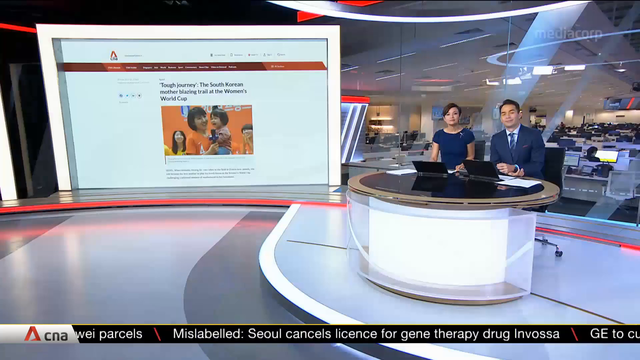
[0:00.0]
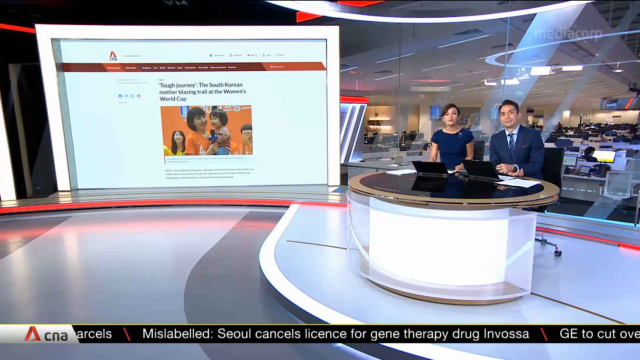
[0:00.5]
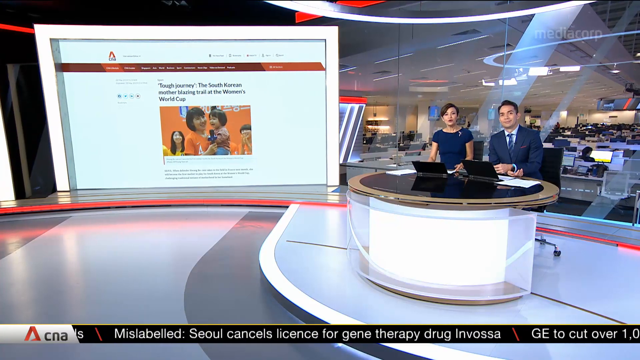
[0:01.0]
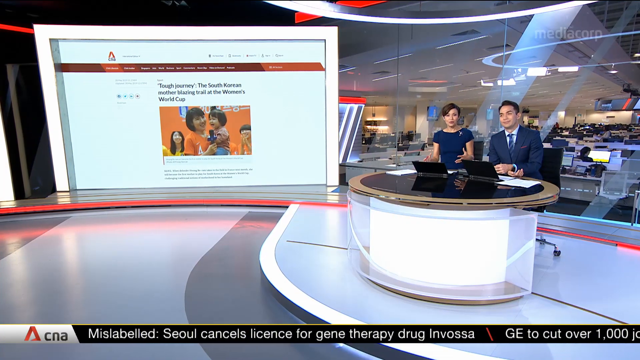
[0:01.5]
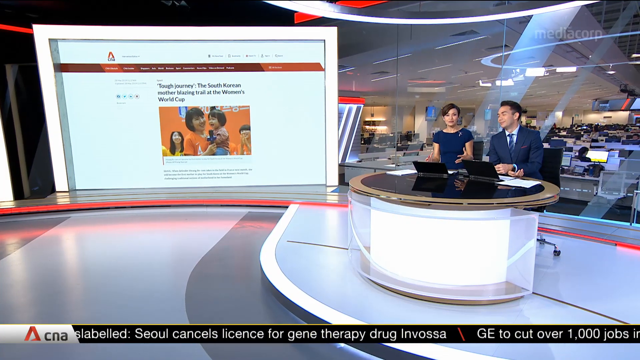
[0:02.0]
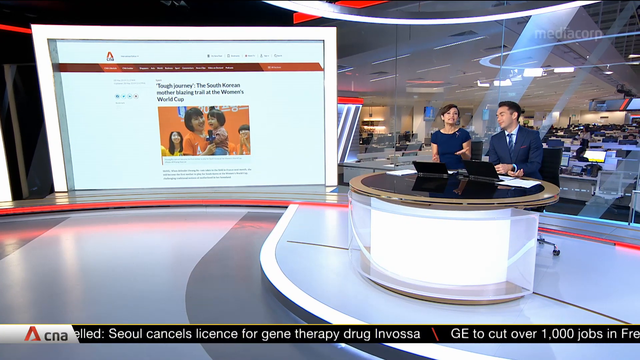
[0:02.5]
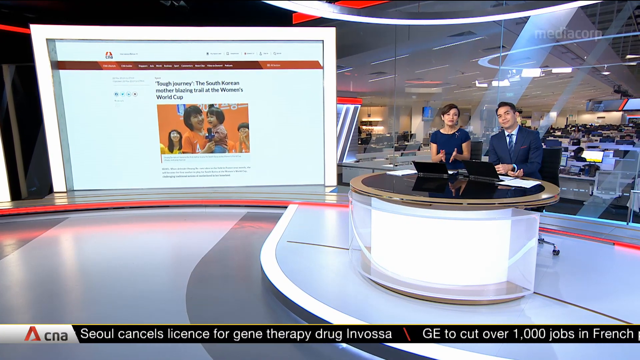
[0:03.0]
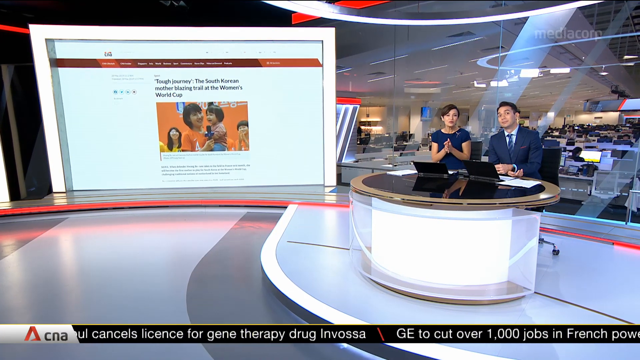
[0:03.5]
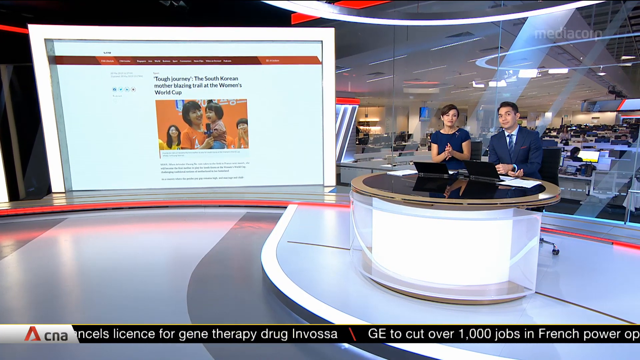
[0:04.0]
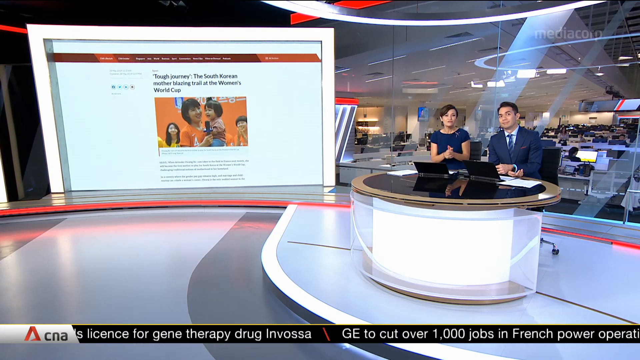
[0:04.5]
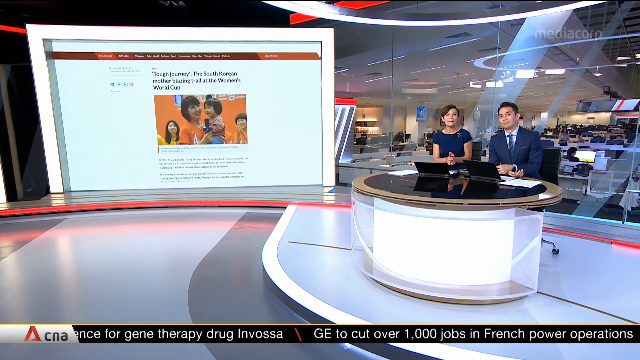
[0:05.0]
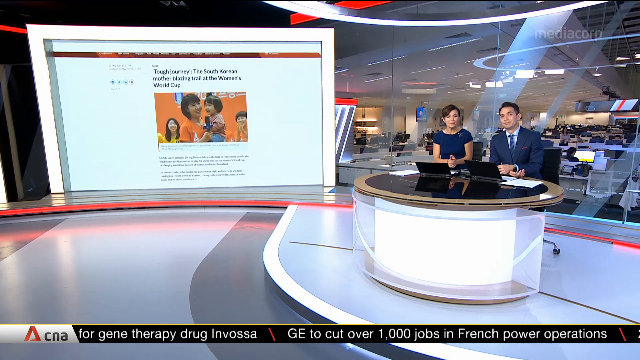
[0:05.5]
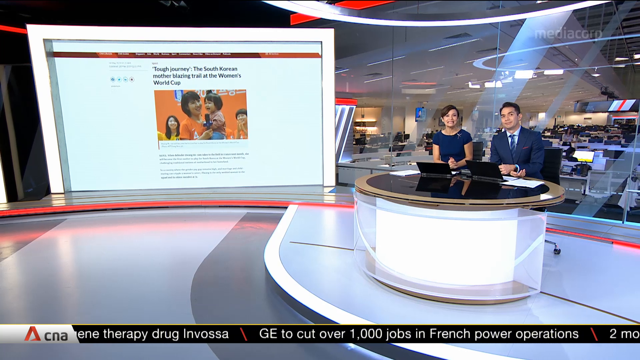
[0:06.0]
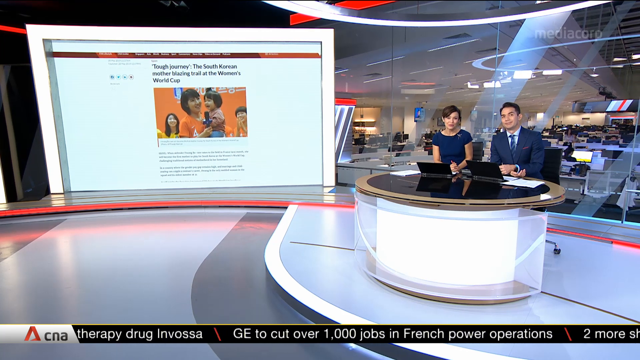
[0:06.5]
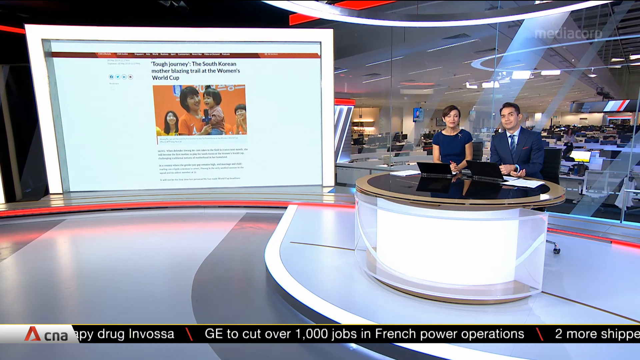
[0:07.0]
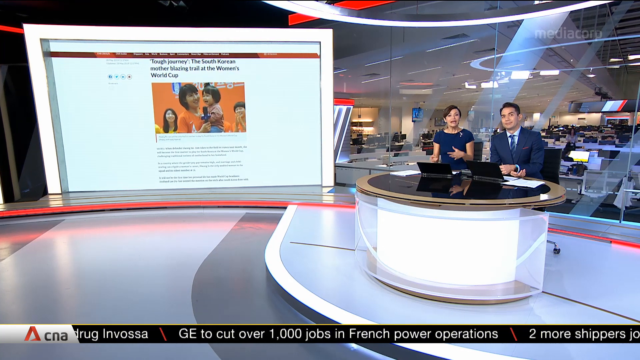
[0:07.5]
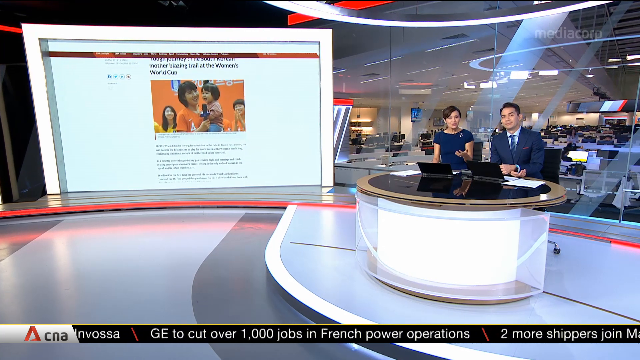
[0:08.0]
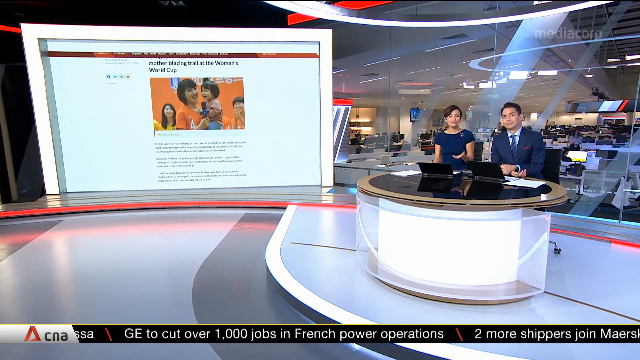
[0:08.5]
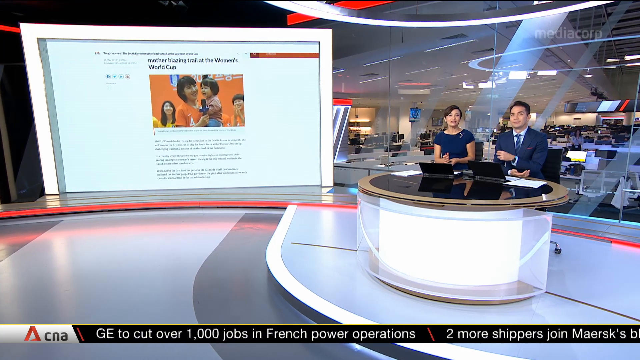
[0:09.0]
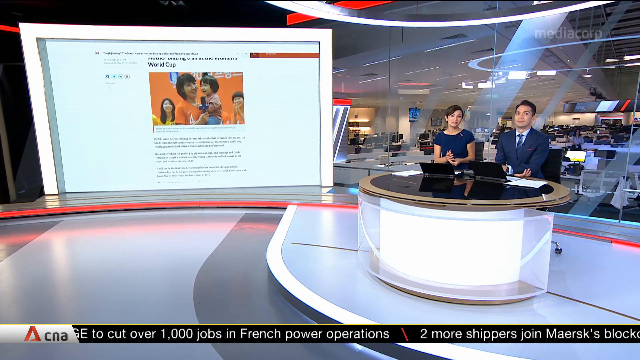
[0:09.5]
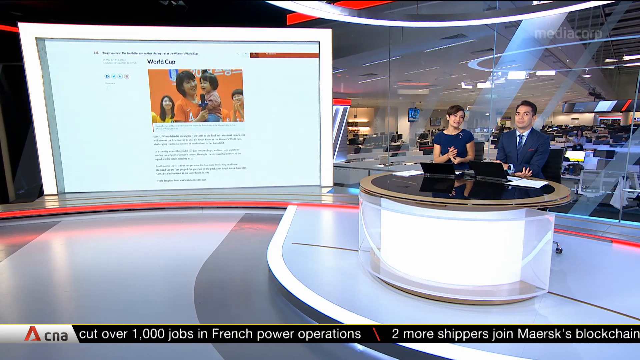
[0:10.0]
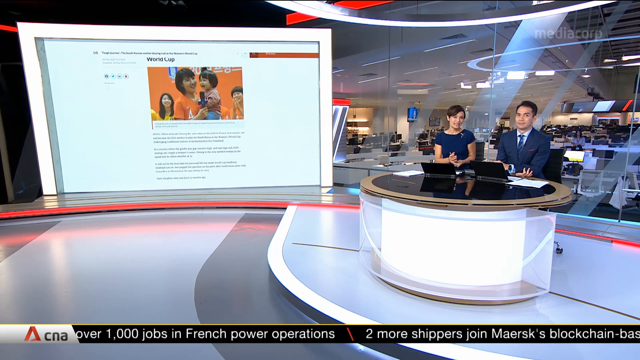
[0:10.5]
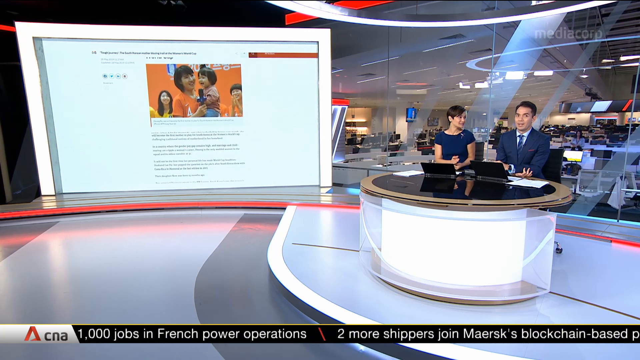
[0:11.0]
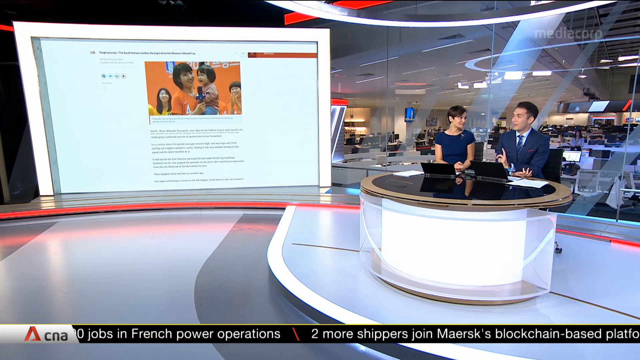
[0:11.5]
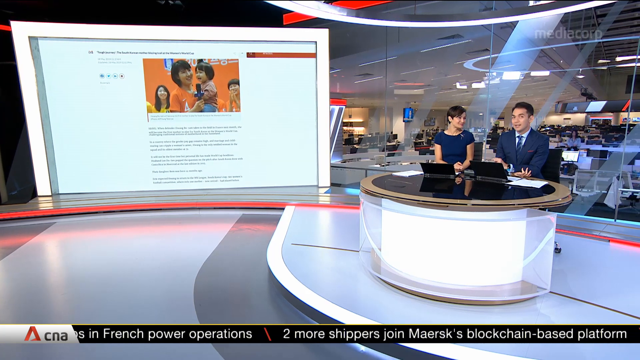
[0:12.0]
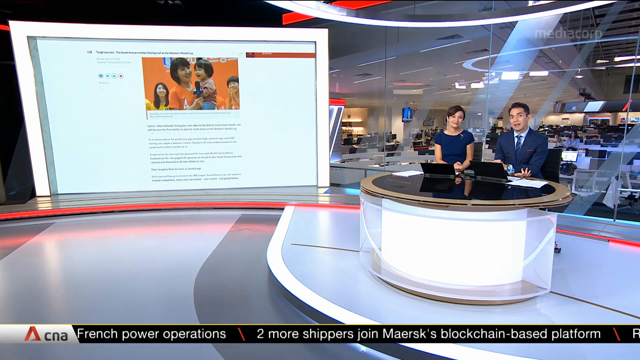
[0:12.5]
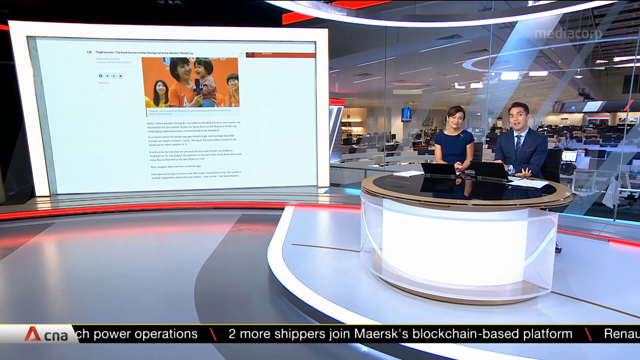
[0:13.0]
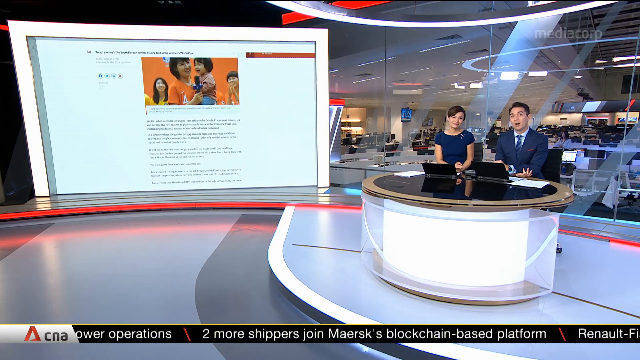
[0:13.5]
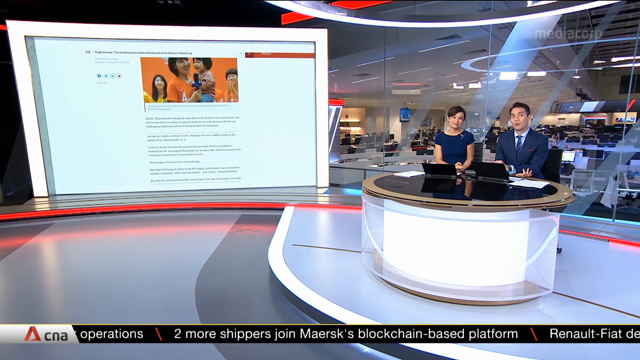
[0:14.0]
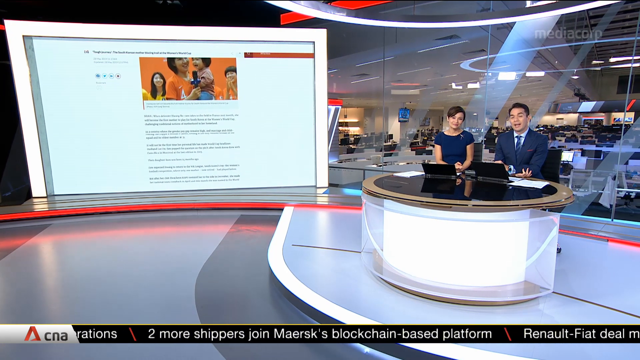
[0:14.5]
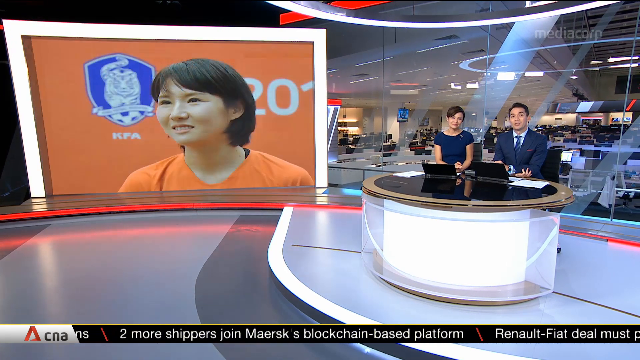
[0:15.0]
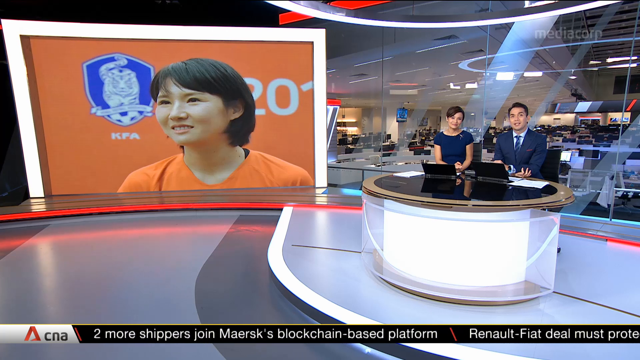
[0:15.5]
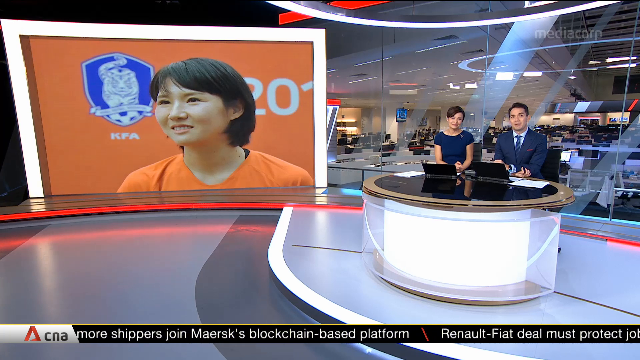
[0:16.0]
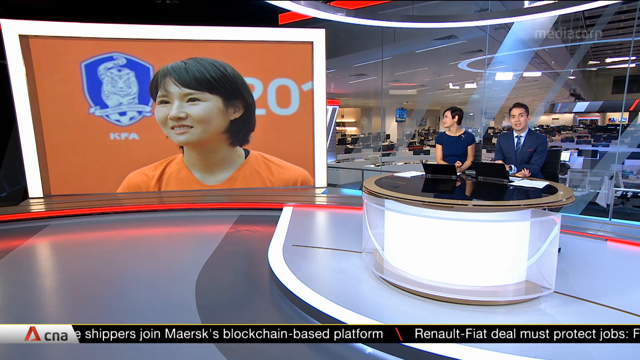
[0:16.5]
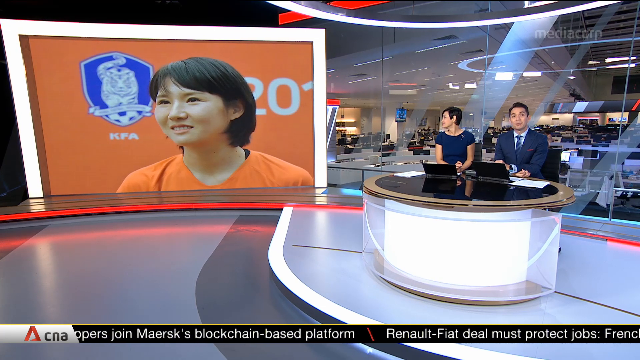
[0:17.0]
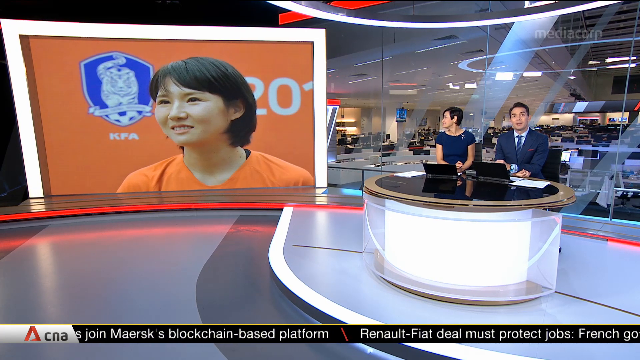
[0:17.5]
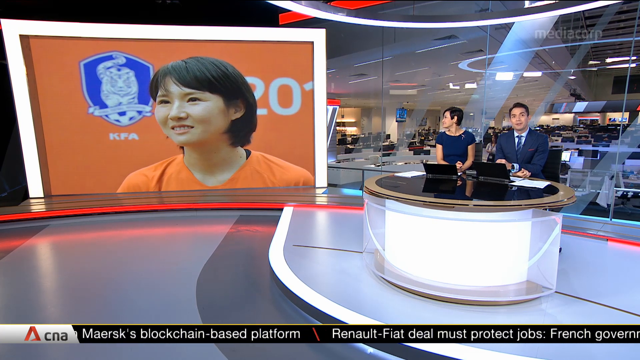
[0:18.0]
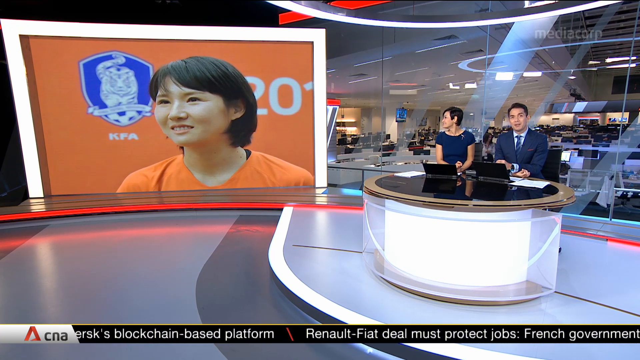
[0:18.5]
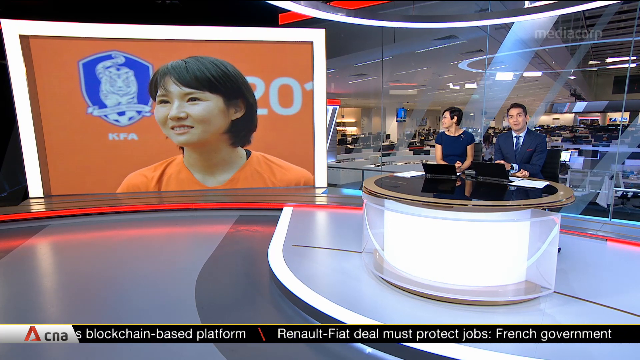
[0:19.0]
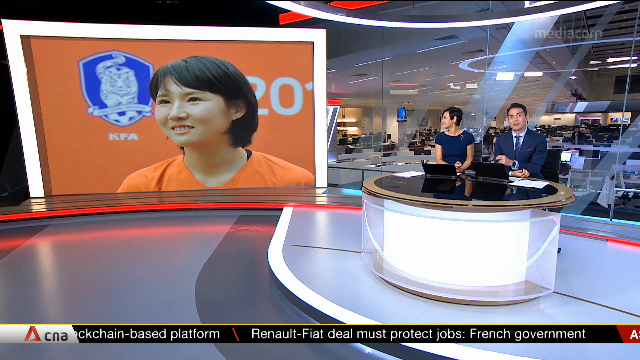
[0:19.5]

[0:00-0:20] In a studio room there are two people: a woman in a blue dress and a man in a blue suit with a blue tie. Laptops are in front of them, and they seem to be presenting news. A news desk in front of them carries their belongings, such as the laptops. In the background, seen from afar, is a pool of other workers, each with a computer in front of them. On the left side of the same studio room is a huge screen showing the news they are presenting, with different topics appearing on it; it appears to be about a South Korean journey. Animated text appears at the bottom of the screen, including "blockchain based platform" as one of the news items shown there. The studio has a huge floor, and red lighting appears around the news presented on the screen.